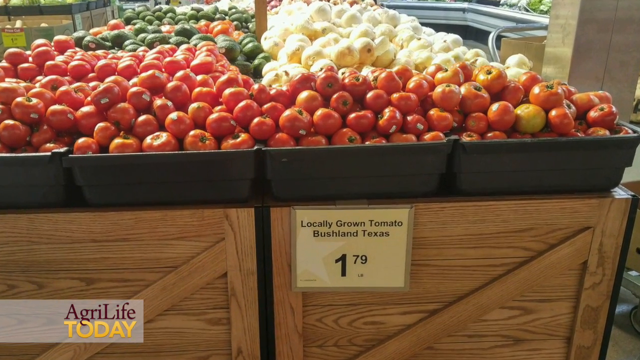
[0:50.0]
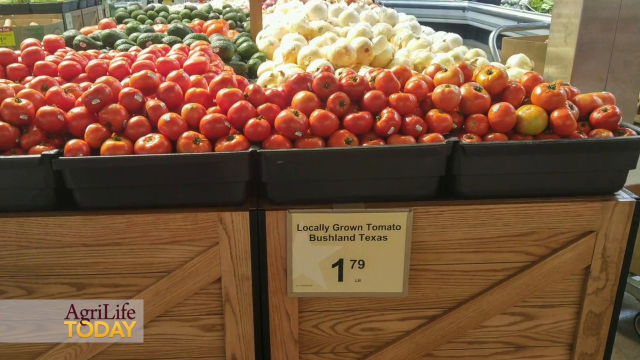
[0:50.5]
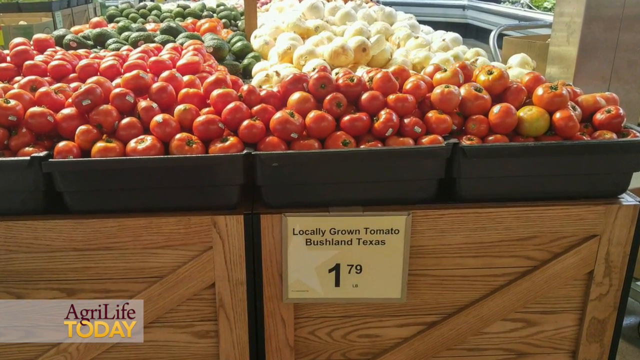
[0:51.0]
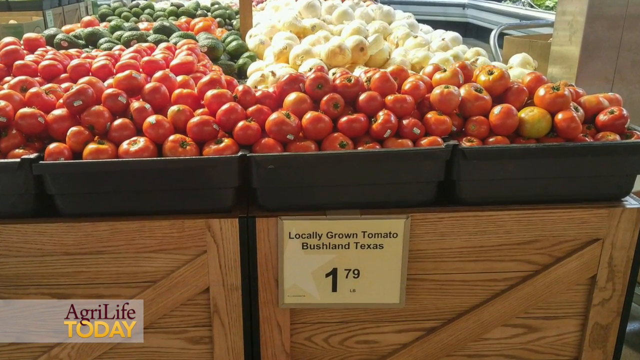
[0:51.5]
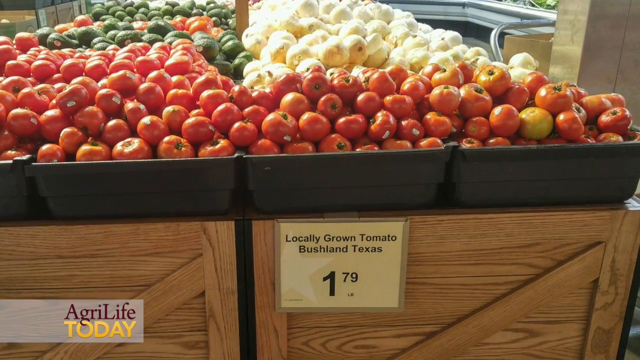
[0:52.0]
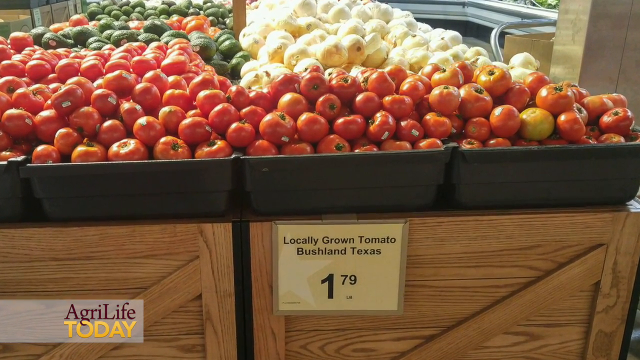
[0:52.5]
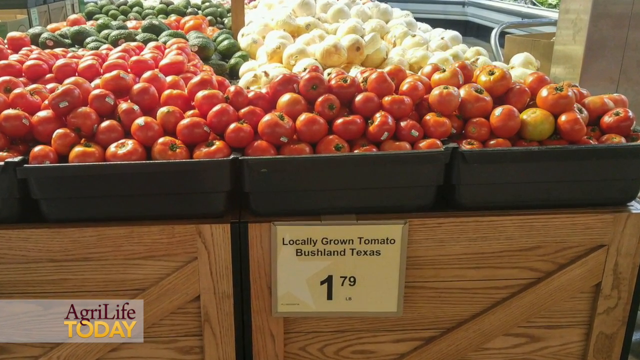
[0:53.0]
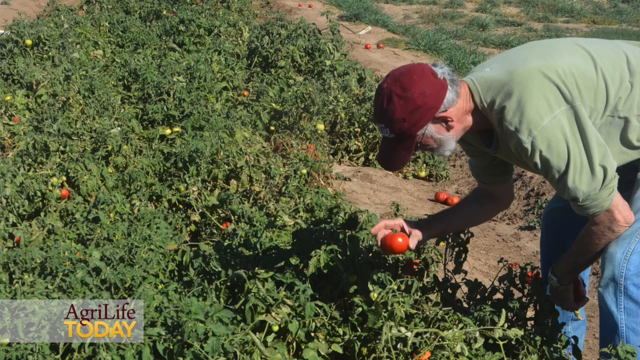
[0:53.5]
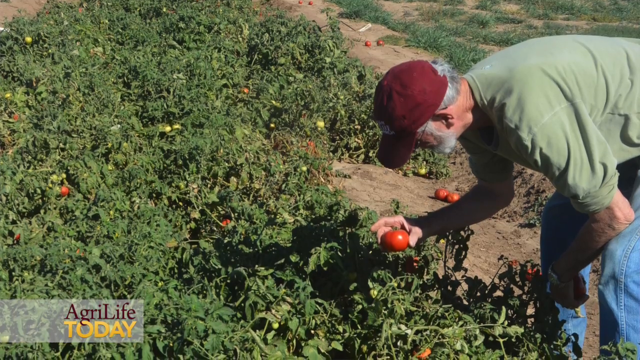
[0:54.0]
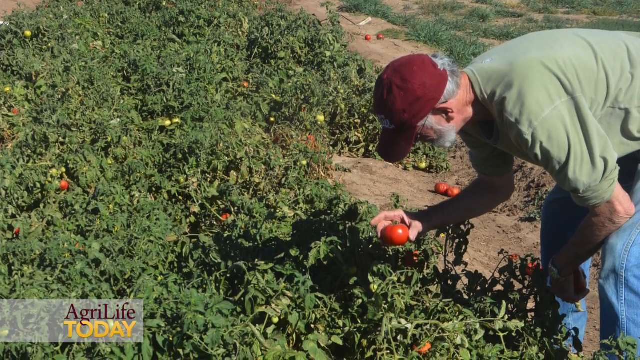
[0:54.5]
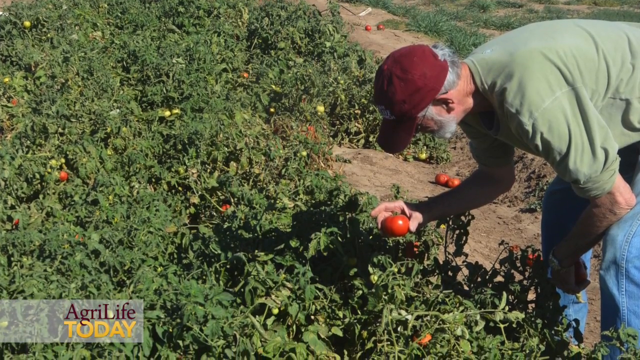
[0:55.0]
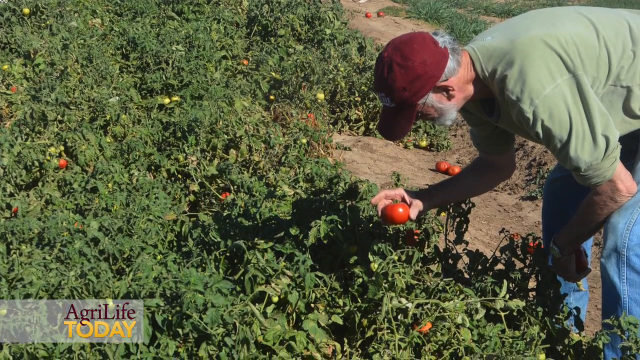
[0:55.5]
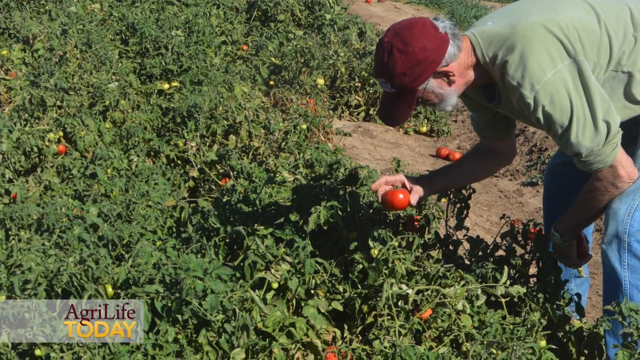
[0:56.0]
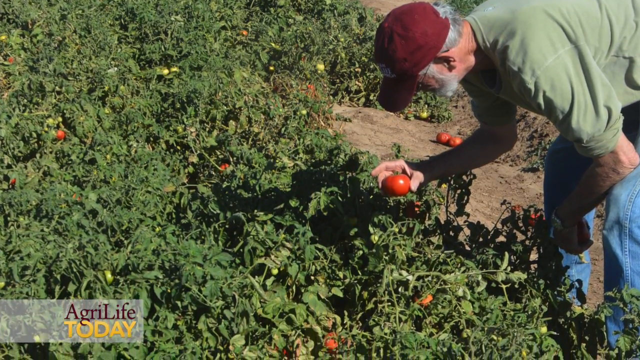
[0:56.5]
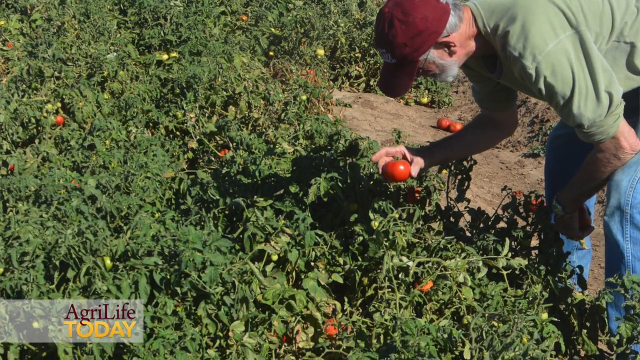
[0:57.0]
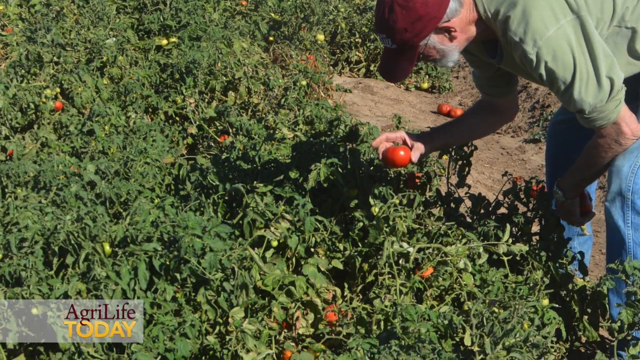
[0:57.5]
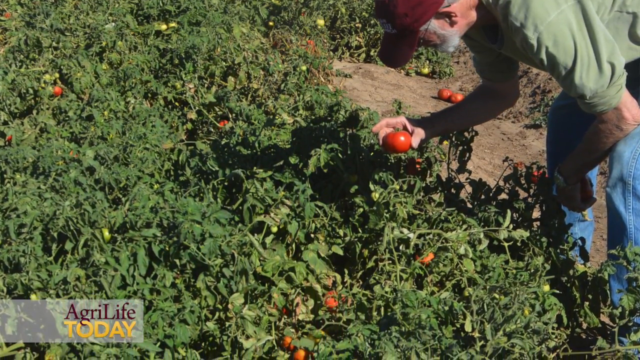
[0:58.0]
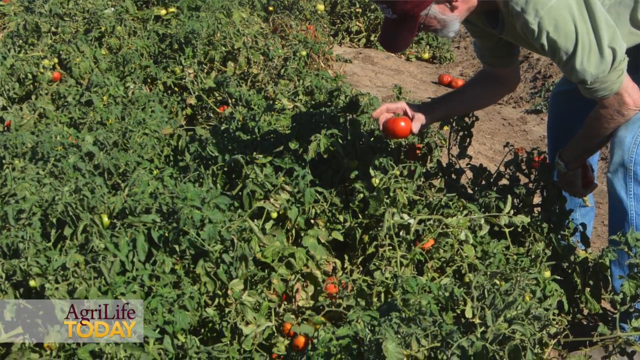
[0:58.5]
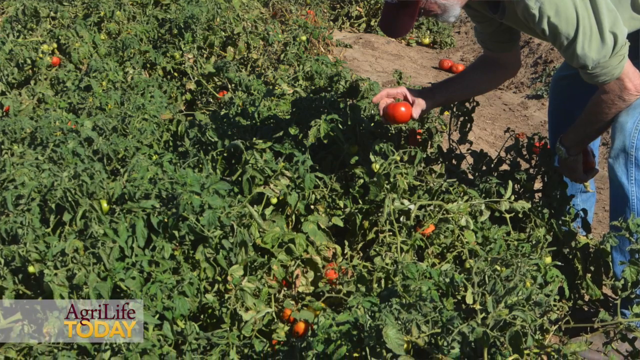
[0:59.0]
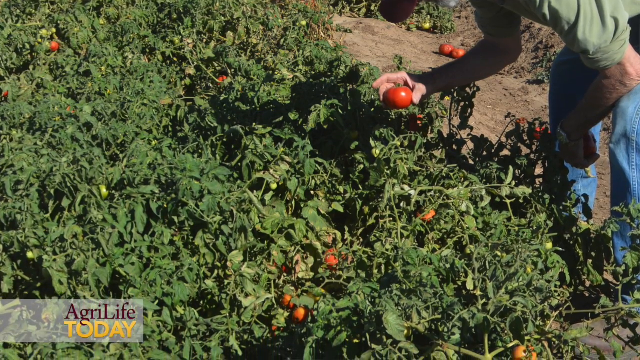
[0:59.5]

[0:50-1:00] Lots of tomatoes appear to be in a shop. Four huge black buckets are filled with red tomatoes, resting on two big wooden crates. Behind the tomatoes there appear to be potatoes or onions, though it is difficult to see exactly what they are, and behind the tomatoes on the left there look to be either green tomatoes or avocados. A sign underneath the tomatoes says "locally grown tomato, Bushland, Texas, $1.79 per pound", which appears to be the price of the tomatoes. The video then shows an older man with gray-white hair and a beard, wearing a burgundy cap, jeans and a green t-shirt, picking a tomato from a tomato plant. The camera pans down to the tomato plant, showing tomatoes on it, and then pans back to the tomatoes in the shop.